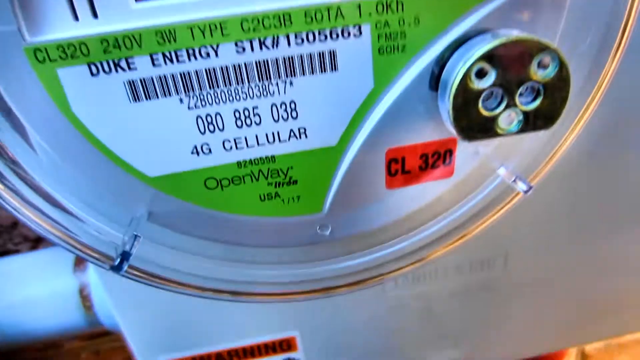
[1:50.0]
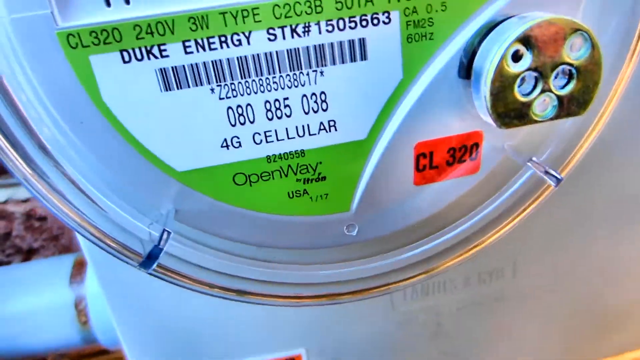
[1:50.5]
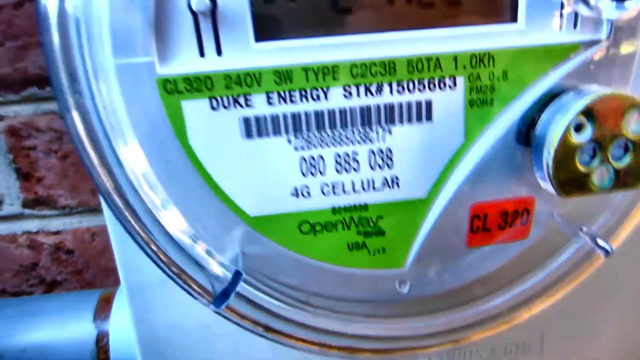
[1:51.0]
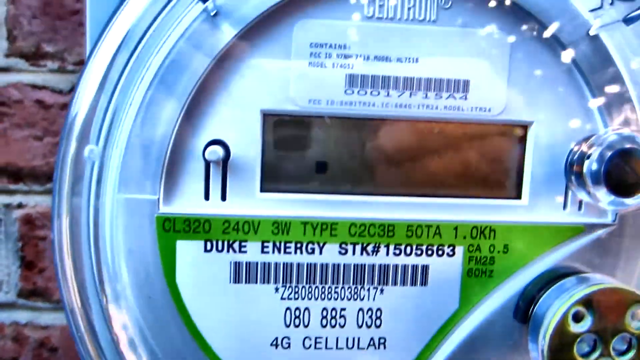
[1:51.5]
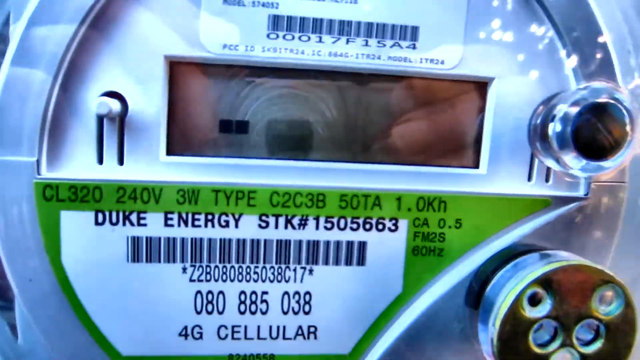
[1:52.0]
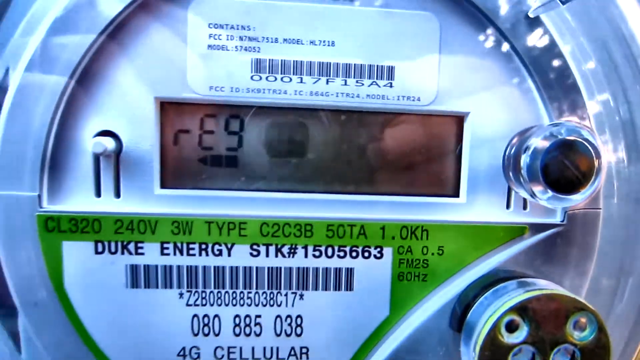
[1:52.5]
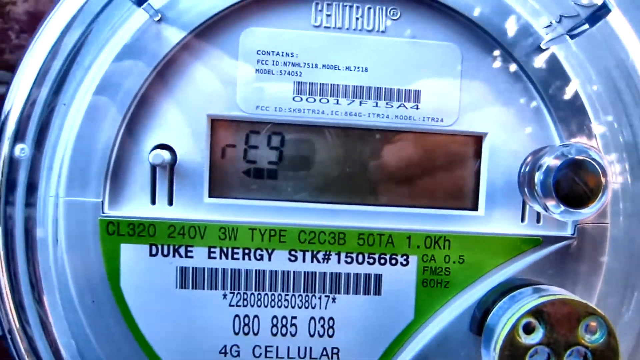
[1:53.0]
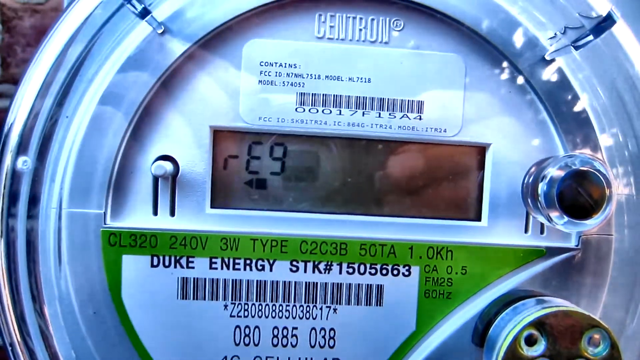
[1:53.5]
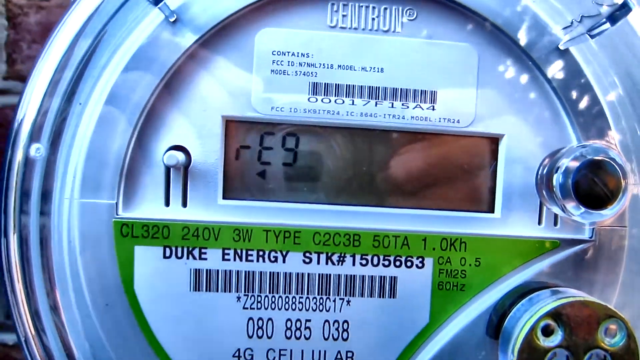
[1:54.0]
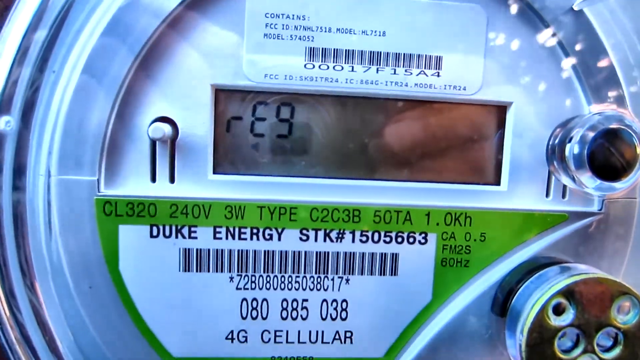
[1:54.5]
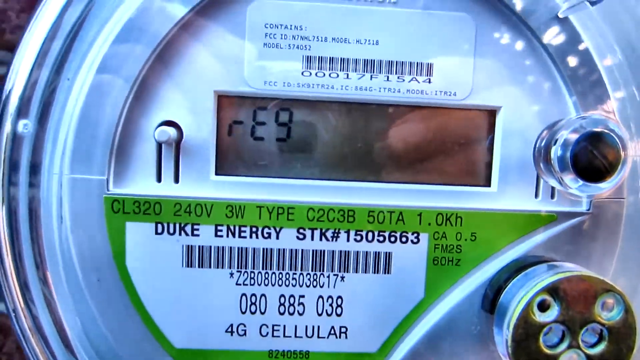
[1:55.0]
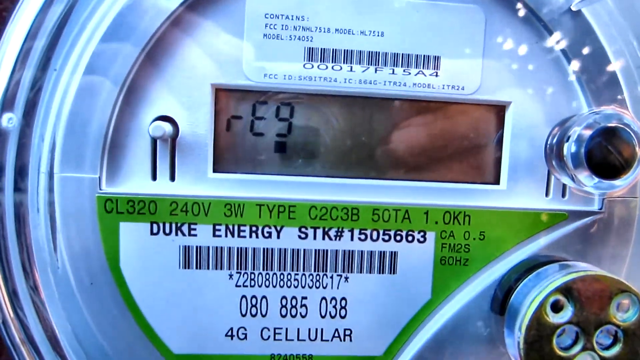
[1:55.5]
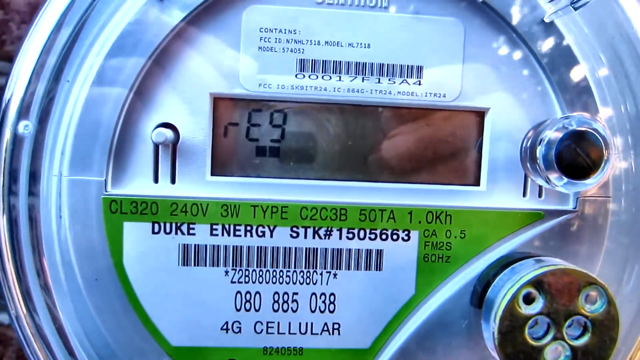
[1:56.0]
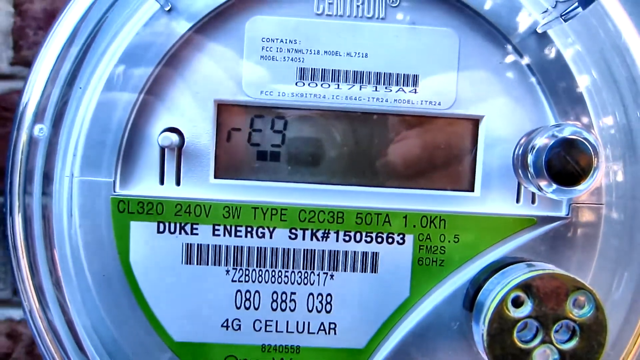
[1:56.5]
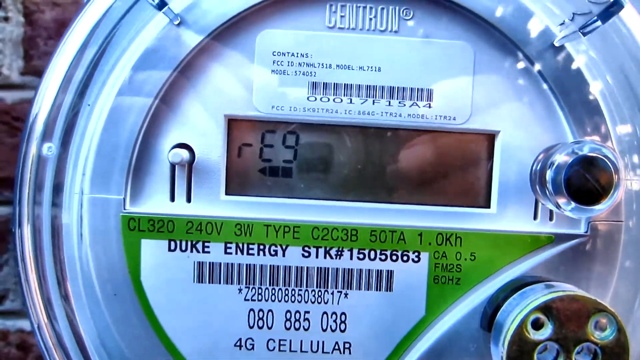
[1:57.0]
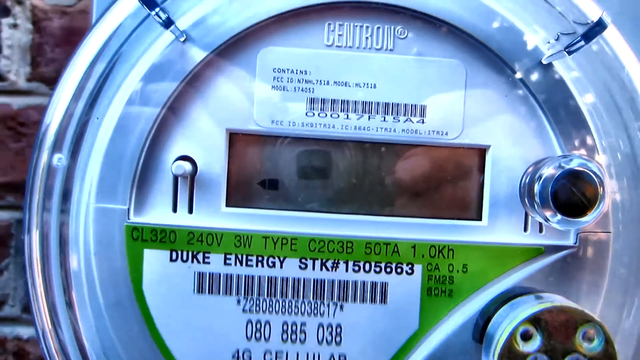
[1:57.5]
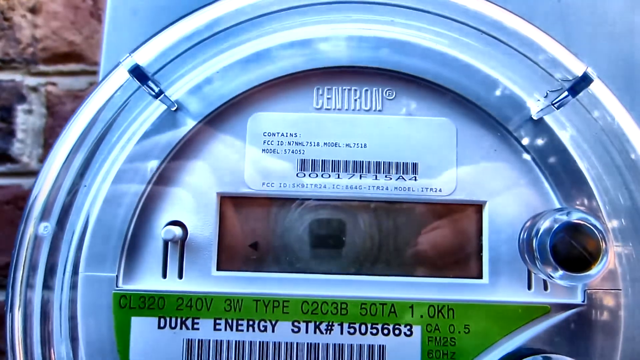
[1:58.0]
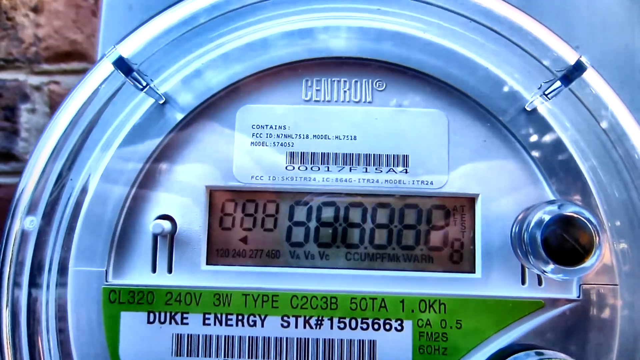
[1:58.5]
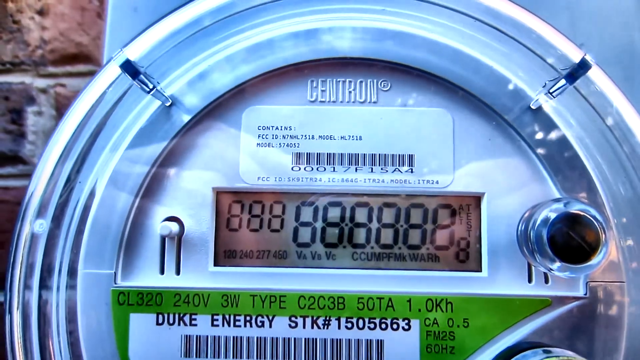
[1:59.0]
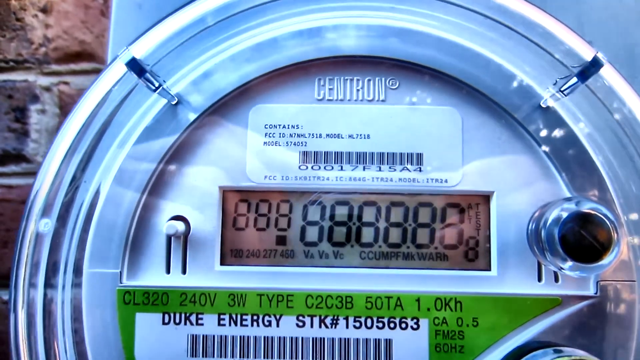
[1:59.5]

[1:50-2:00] The camera is panned in on the barcode, where "4G Cellular" is clearly visible. Below that is more green of the sticker reading "OpenWay", then a small word that cannot be made out, and below that "USA". To the left of the green and white barcode sticker is a red rectangular sticker that says "CL320" in black letters and looks like it could easily be pulled off. The camera then goes back up to show the whole meter and focuses in on the long rectangle where the meter is read, whose numbers and letters look like those on a stopwatch.